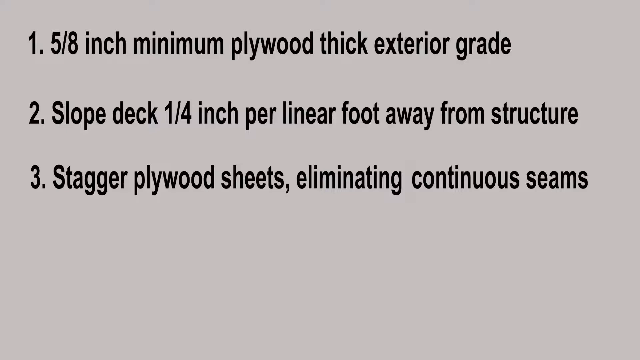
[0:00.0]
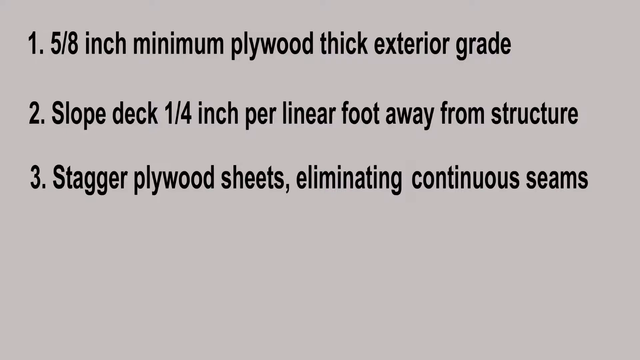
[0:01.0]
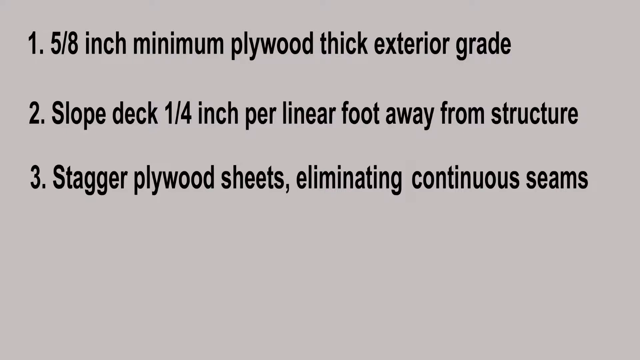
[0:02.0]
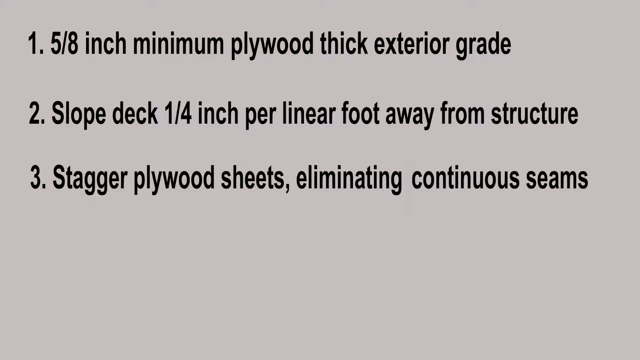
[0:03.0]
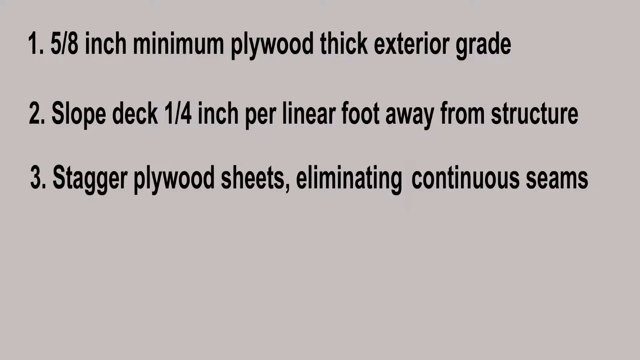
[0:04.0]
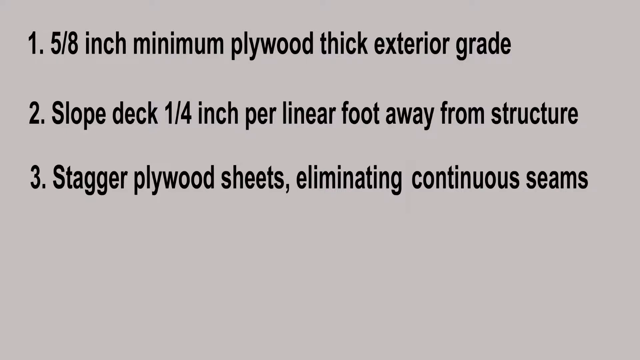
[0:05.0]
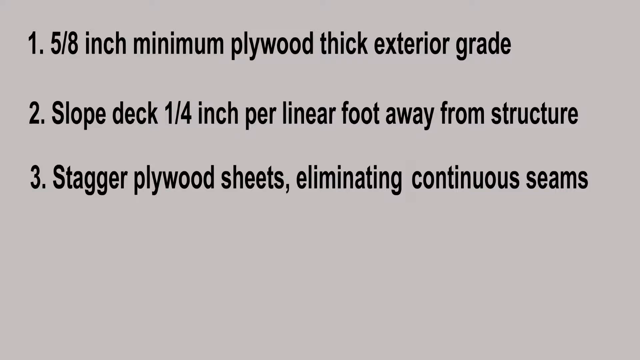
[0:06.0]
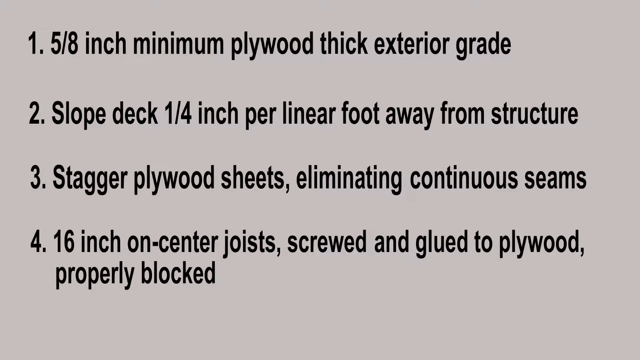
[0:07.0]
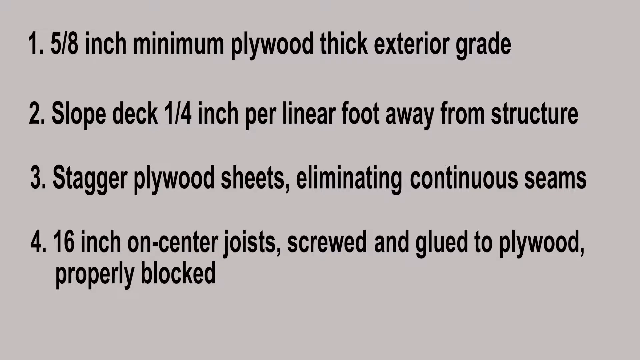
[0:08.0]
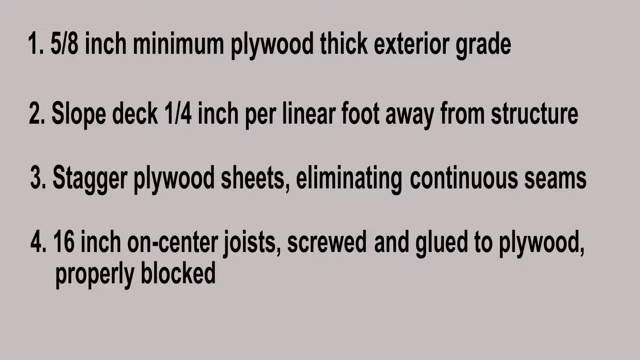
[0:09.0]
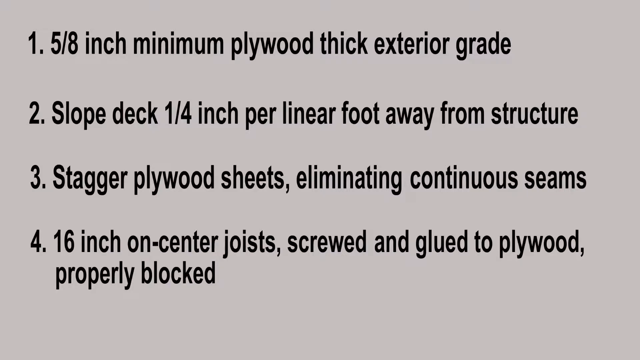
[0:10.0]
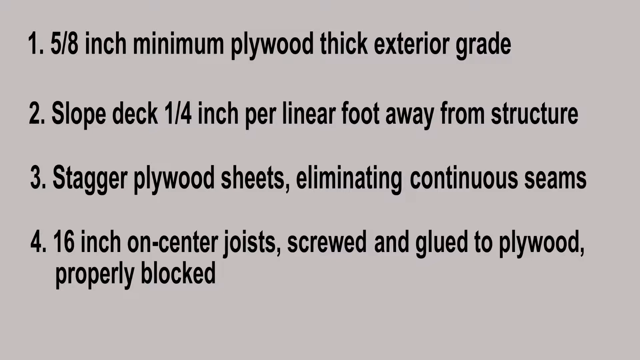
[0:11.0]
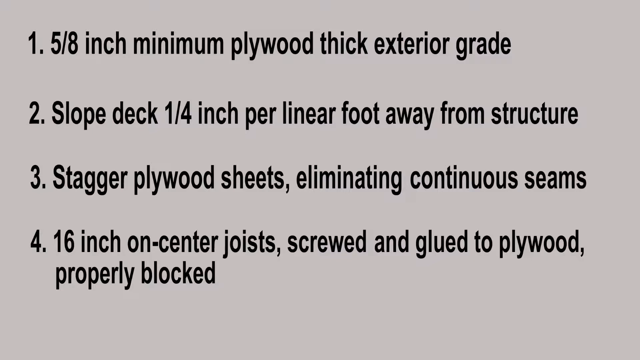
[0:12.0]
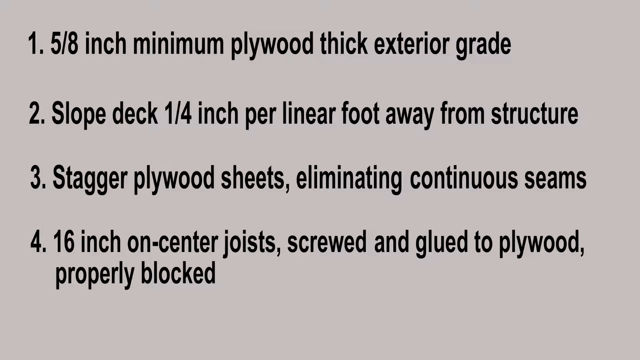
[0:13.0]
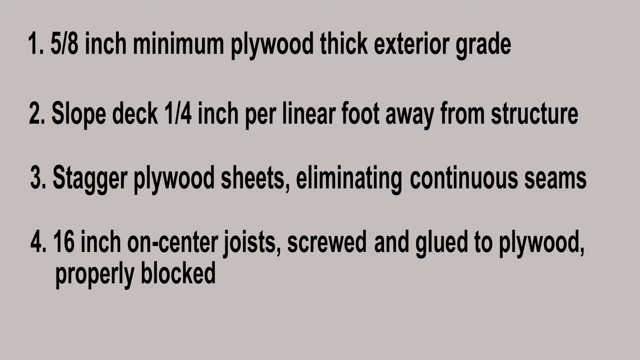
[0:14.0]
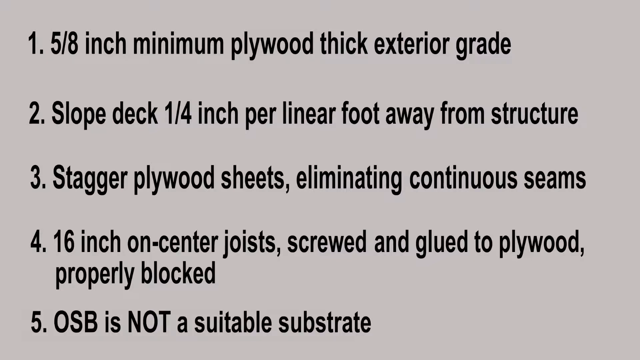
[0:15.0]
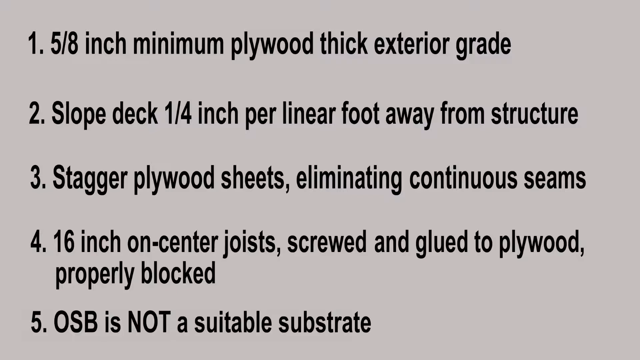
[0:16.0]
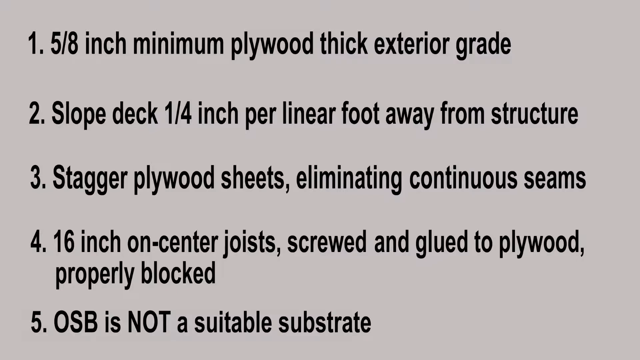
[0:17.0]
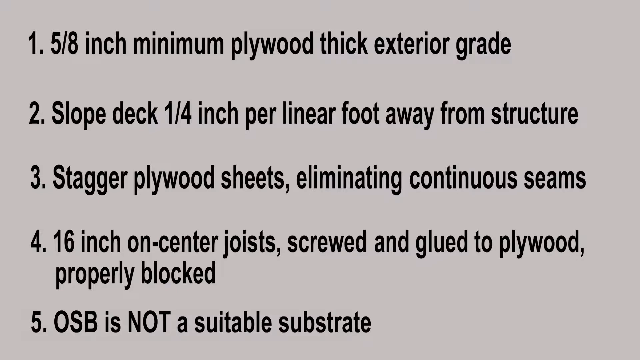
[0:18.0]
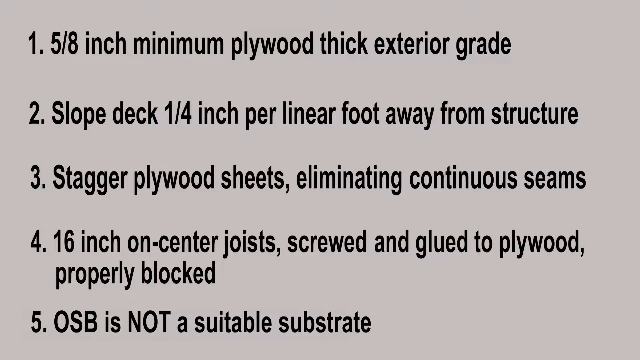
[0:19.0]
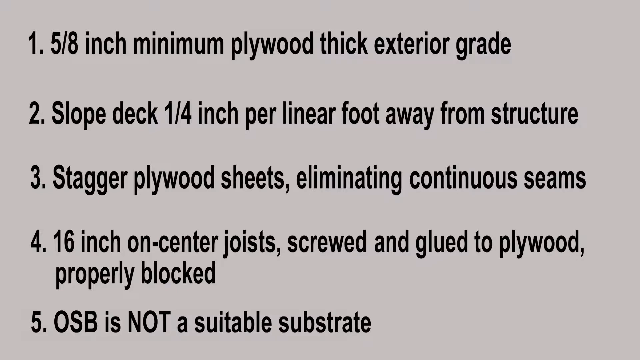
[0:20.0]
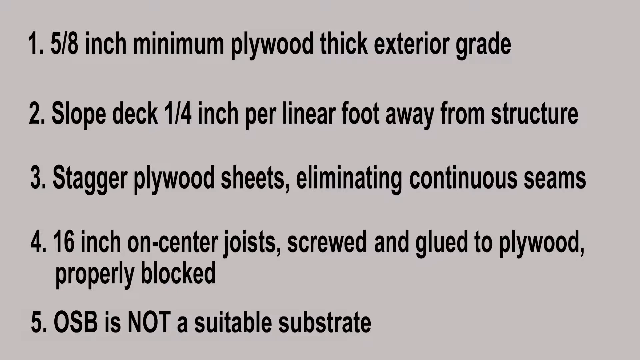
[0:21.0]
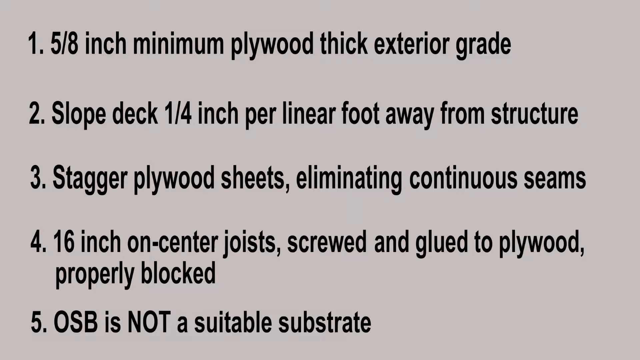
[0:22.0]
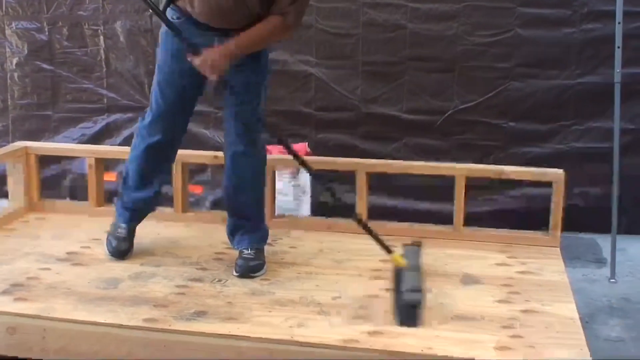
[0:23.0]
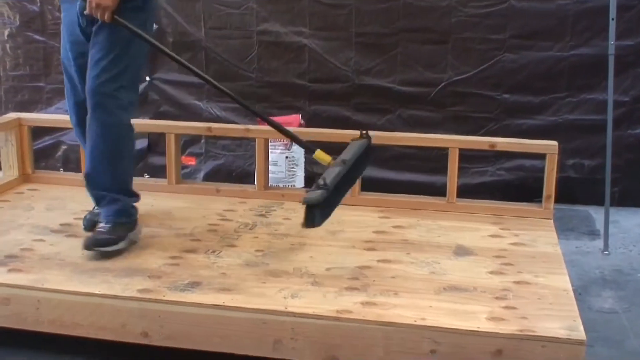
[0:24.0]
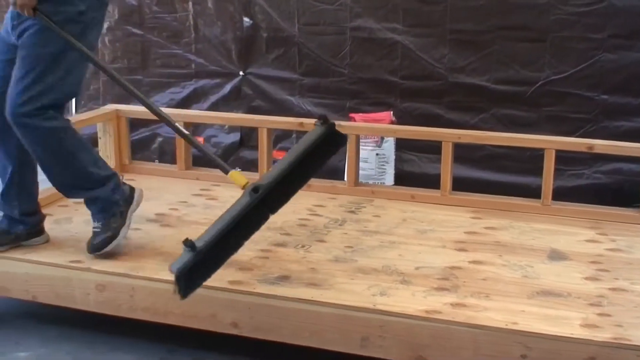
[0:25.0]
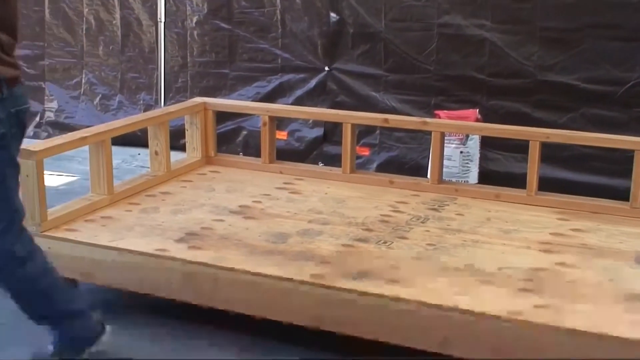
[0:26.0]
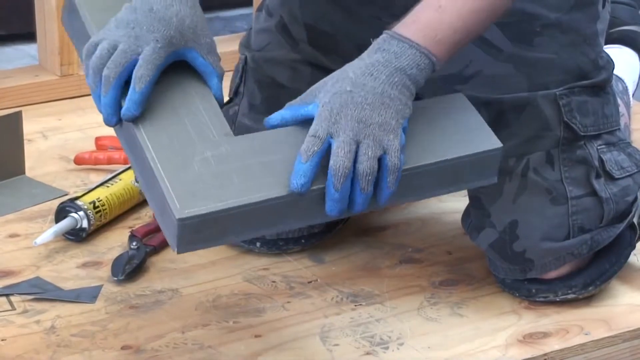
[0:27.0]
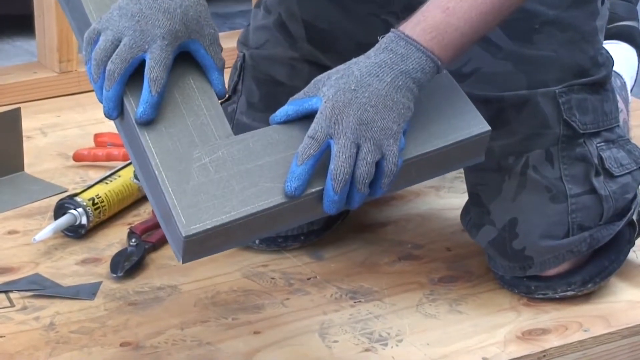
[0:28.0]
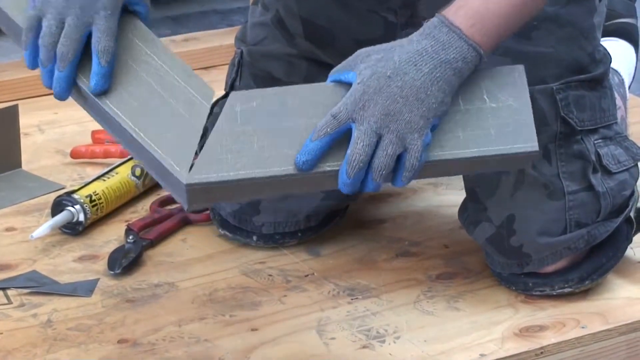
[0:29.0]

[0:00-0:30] A how-to and DIY video opens with text on a grayish background, appearing as numbered points. Number one says "5 8 inch minimum plywood, thick exterior grade." Number two says "slope deck, quarter inch per linear foot away from structure." Number three says "stagger plywood sheets, eliminating continuous seams." Number four appears and says "16-inch on-center joists screwed and glued to plywood properly blocked." Number five says "OSB is NOT a suitable substrate," with "NOT" in capitals. Next, a man holds a large black brush; only the bottom half of his body is visible, and he wears jeans and blue trainers. He sweeps toward the right-hand side. On the ground is what looks like a sheet of plywood, and along the back edges there is timber framing at about knee level. Behind him are some black sheeting and a bag of something. He then walks off the left-hand side of the screen.